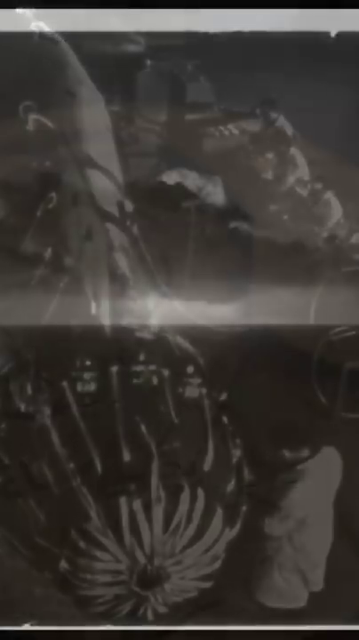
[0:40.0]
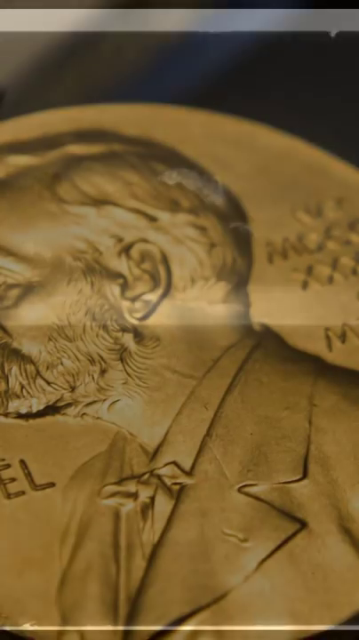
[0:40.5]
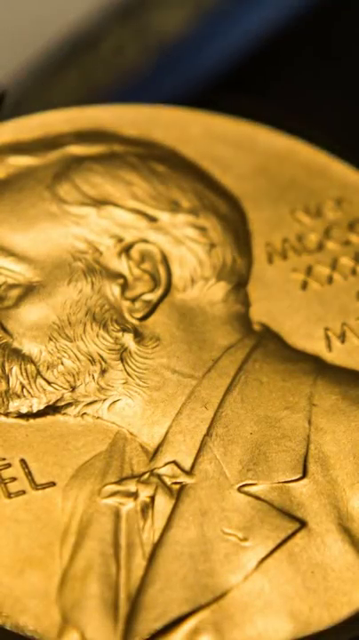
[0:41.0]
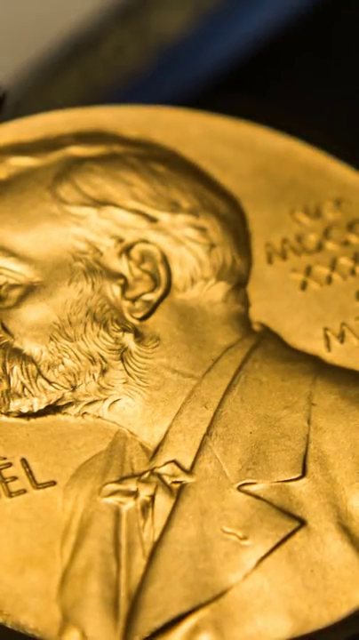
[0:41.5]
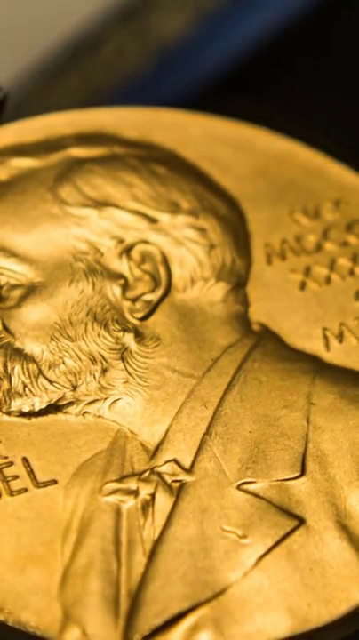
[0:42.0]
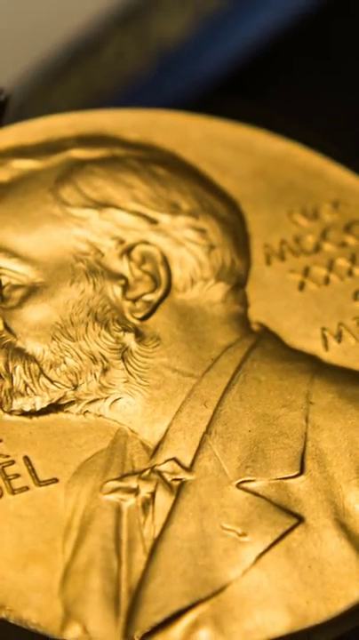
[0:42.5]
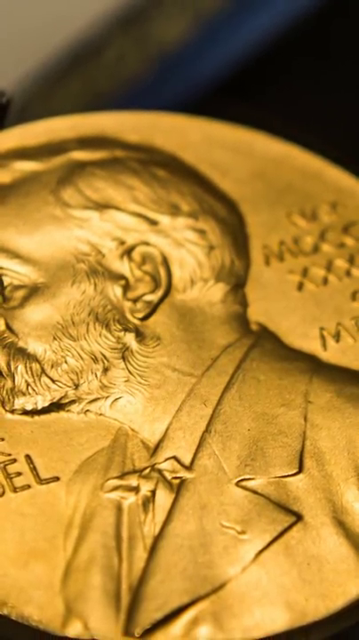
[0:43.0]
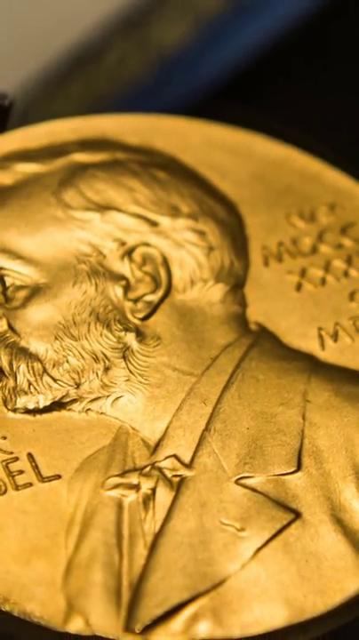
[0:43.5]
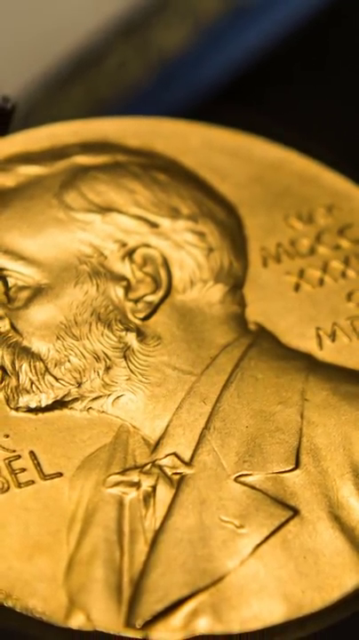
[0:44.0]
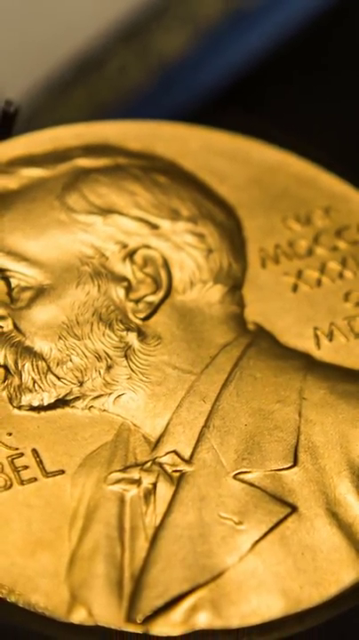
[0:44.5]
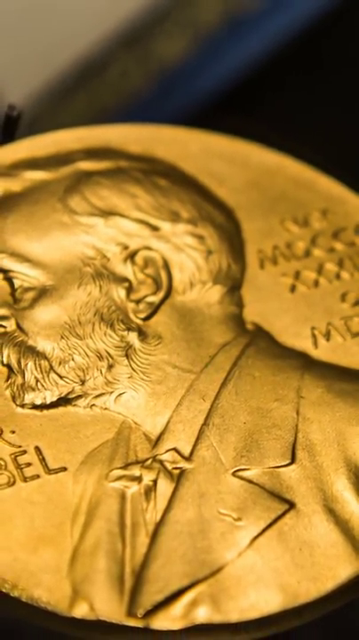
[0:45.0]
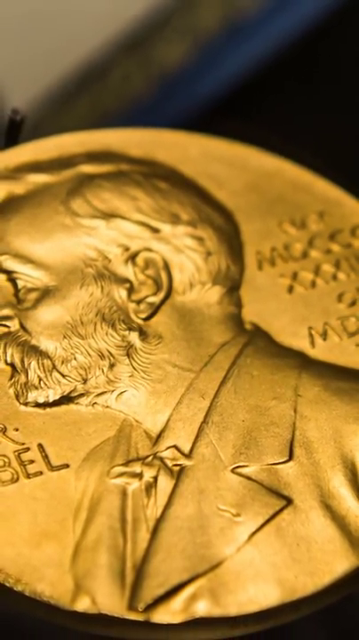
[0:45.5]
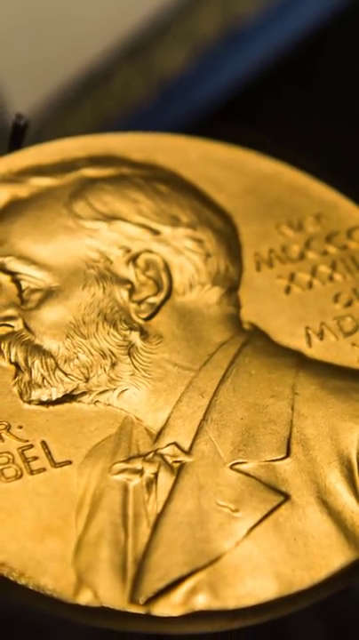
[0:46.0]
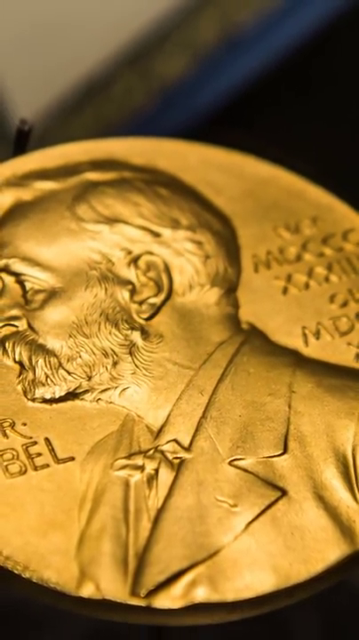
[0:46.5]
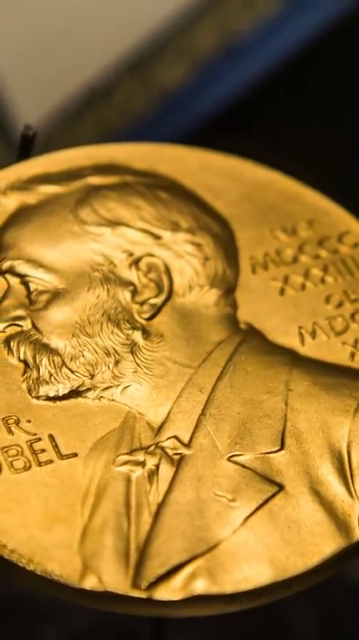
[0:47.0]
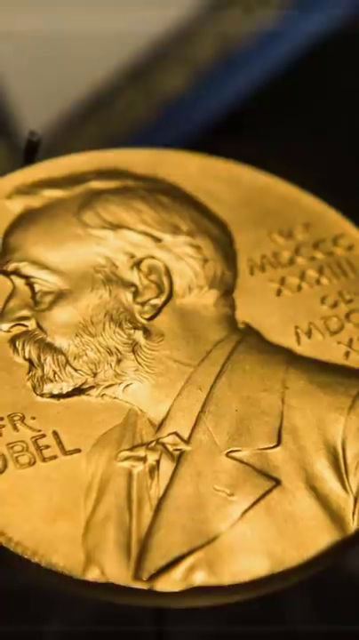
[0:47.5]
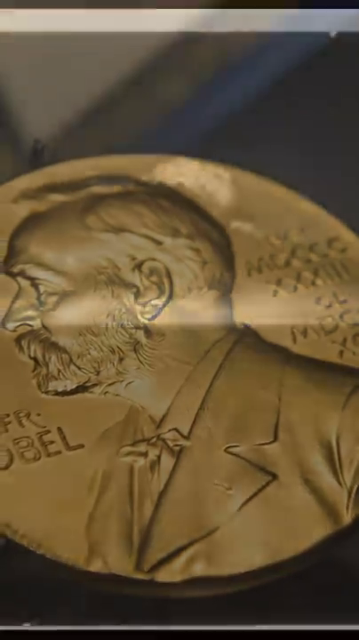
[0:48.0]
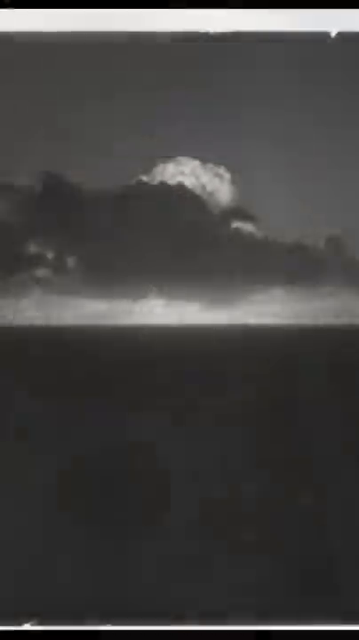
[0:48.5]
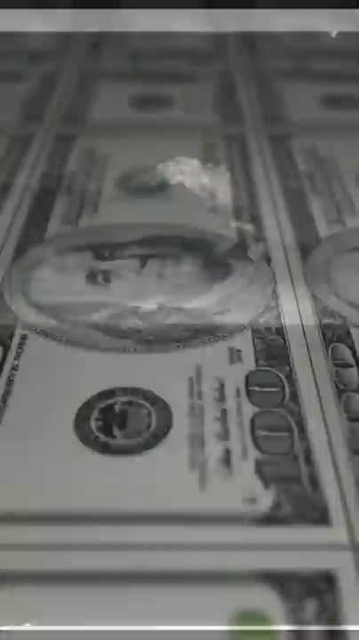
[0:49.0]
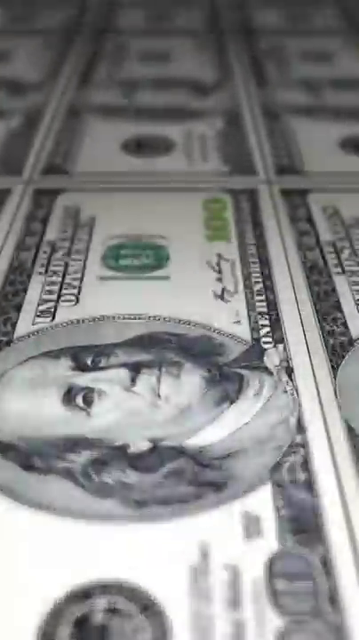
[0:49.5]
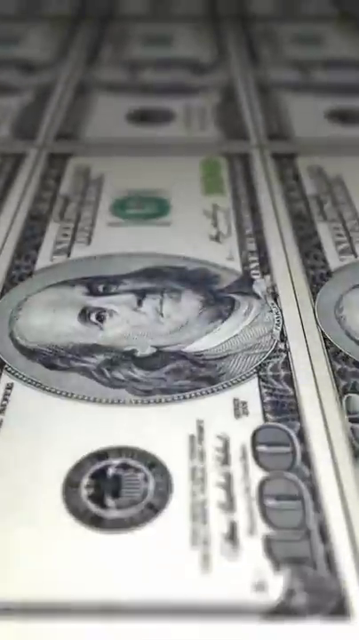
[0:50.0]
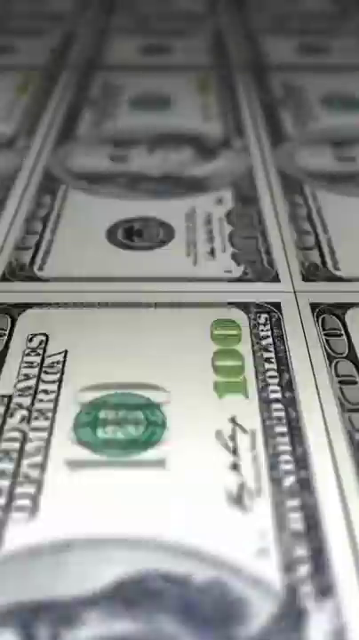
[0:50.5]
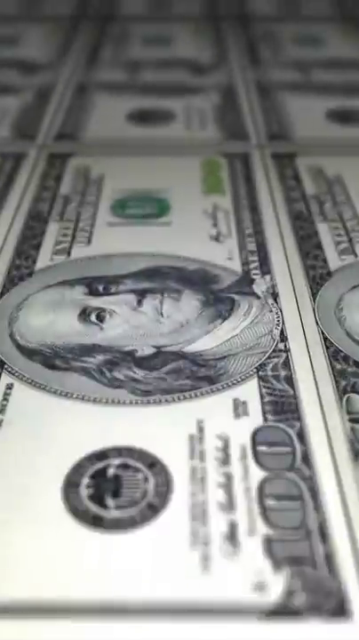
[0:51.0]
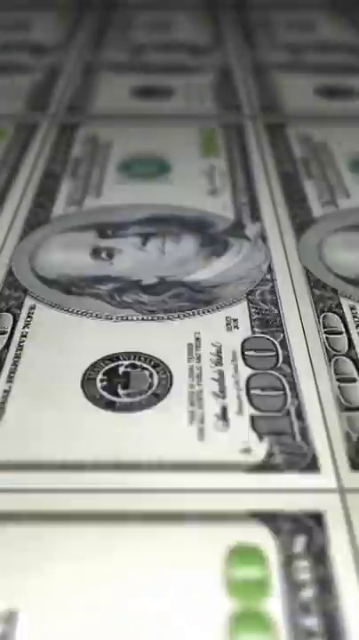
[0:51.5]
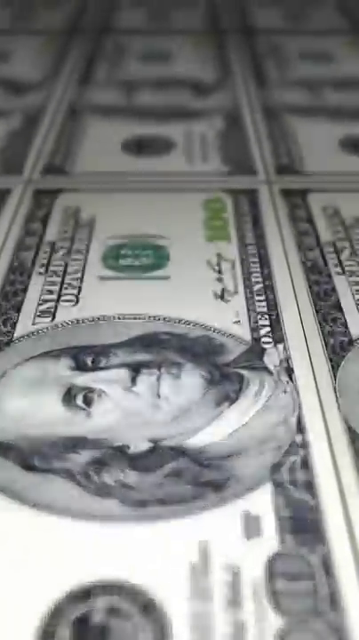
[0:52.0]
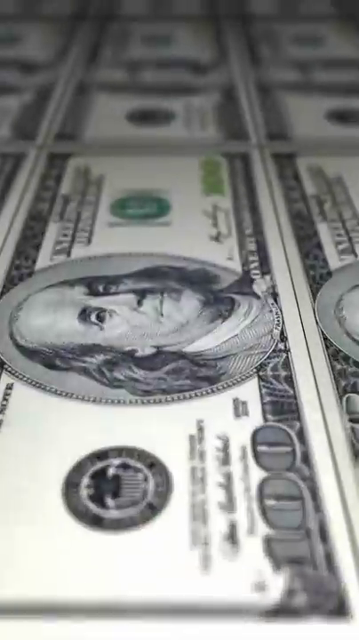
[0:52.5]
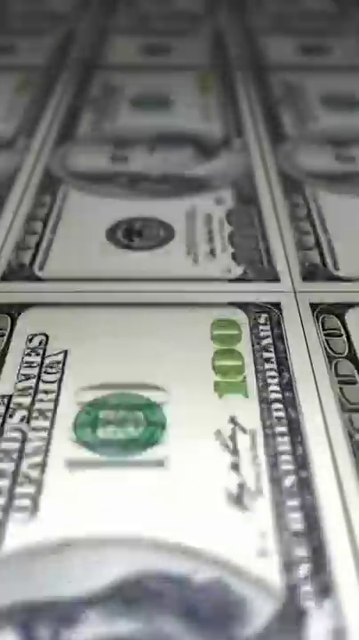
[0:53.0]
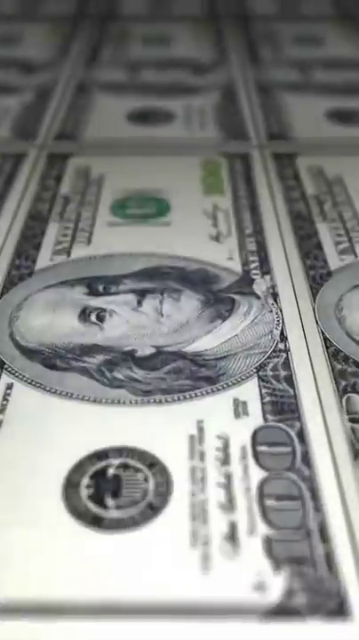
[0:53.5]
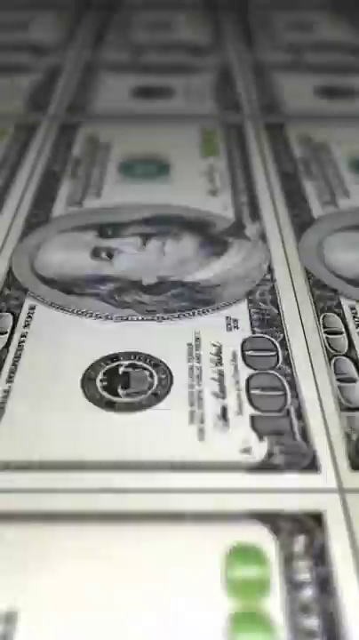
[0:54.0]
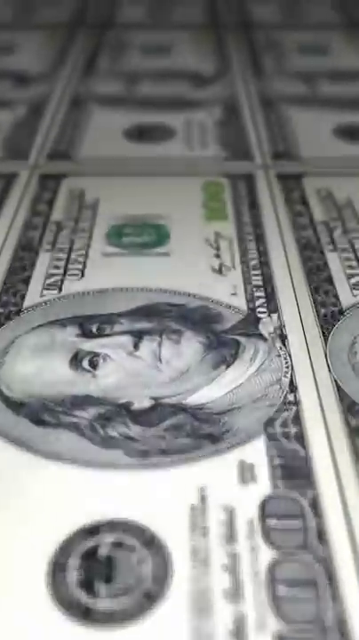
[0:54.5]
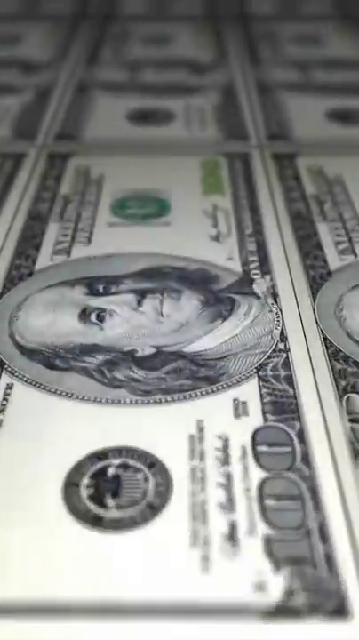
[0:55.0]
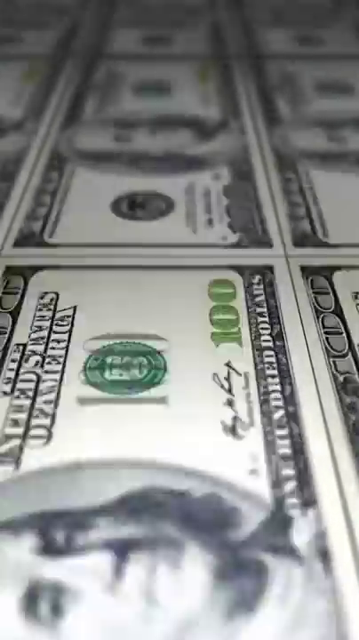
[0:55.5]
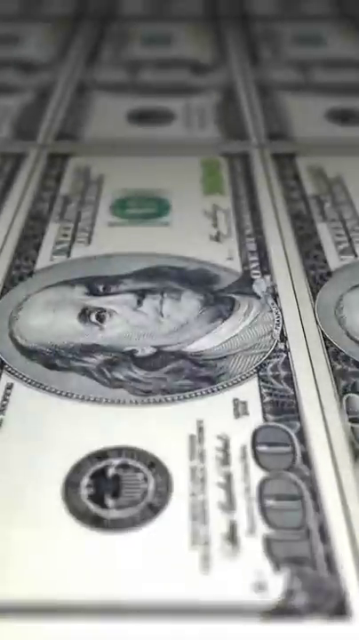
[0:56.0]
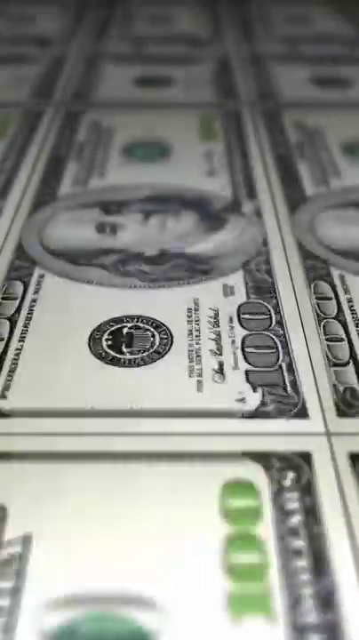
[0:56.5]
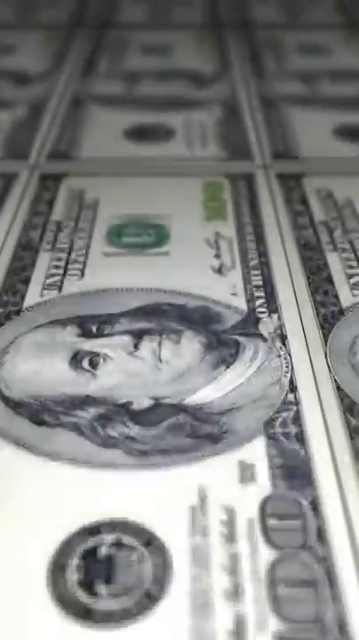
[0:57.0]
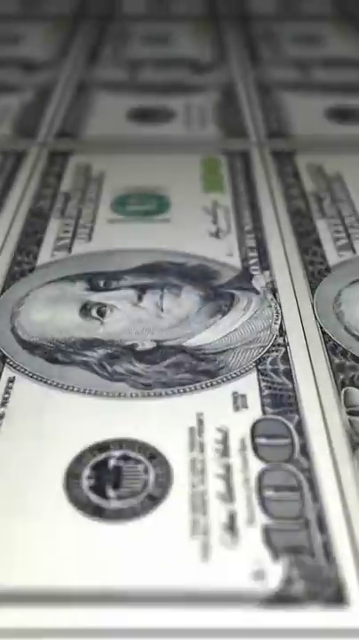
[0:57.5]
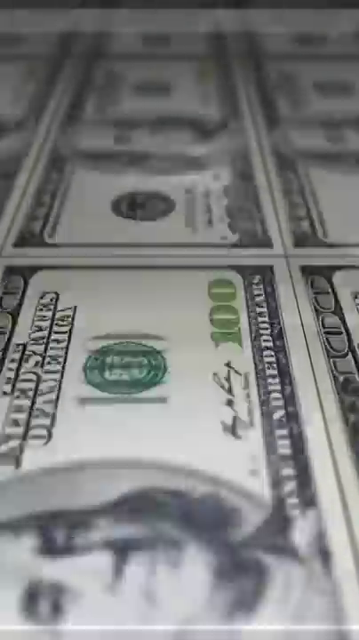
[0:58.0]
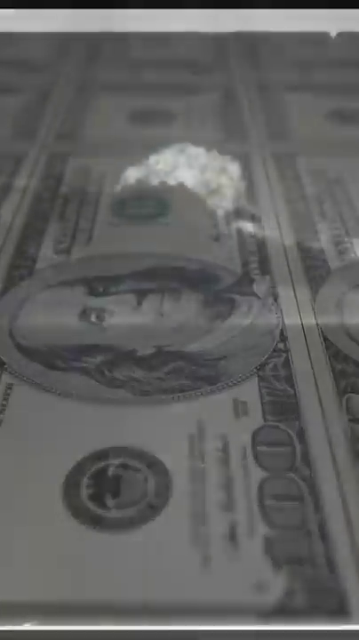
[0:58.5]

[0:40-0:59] An image of a nuclear explosion appears briefly before fading to a golden coin bearing a bearded man in a suit facing to the left, with the letters "B.E.L." and Roman numerals on the right side. A gray, depressing skyline follows, showing the aftermath of the nuclear explosion. Benjamin Franklin $100 bills are then shown being printed as the view scrolls toward the viewer. The final shot is a mushroom cloud continuing upward into a gray filtered sky.